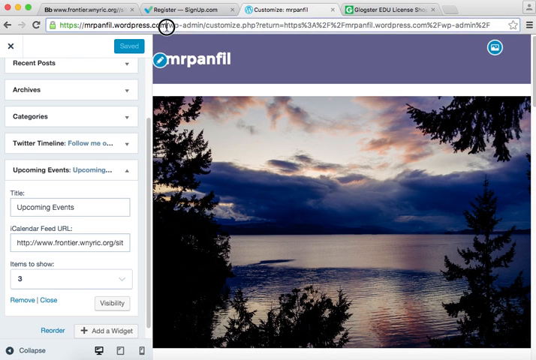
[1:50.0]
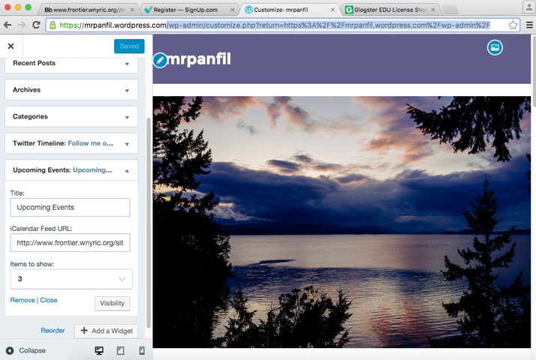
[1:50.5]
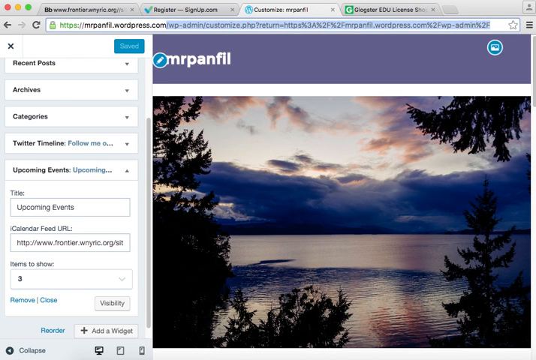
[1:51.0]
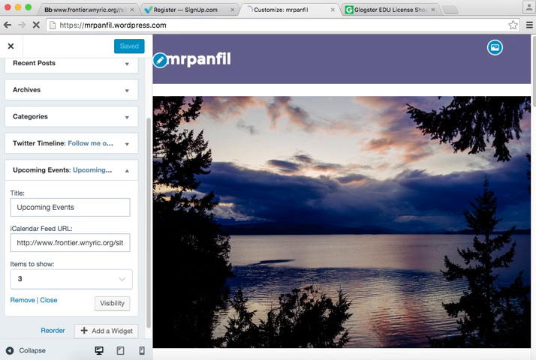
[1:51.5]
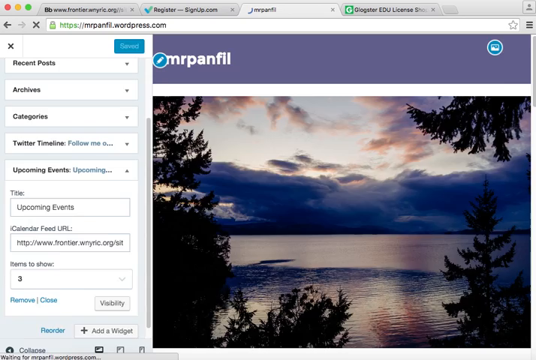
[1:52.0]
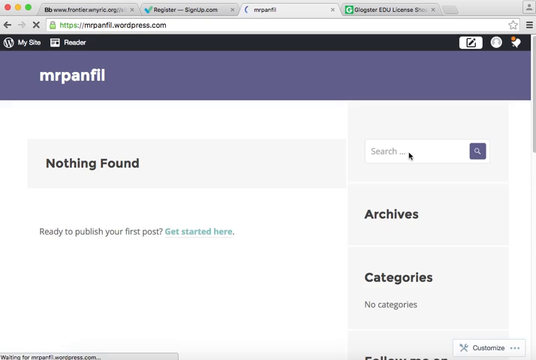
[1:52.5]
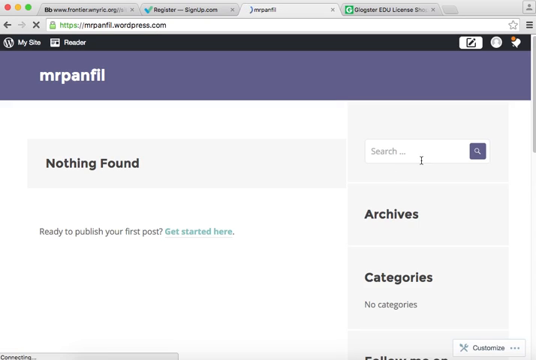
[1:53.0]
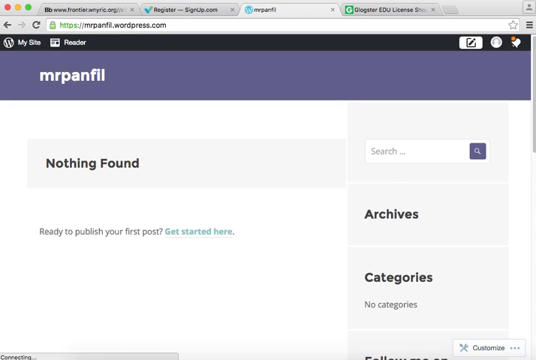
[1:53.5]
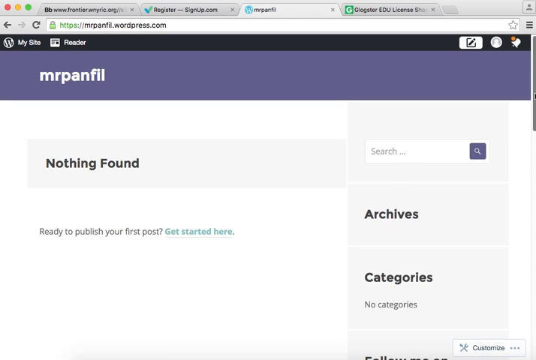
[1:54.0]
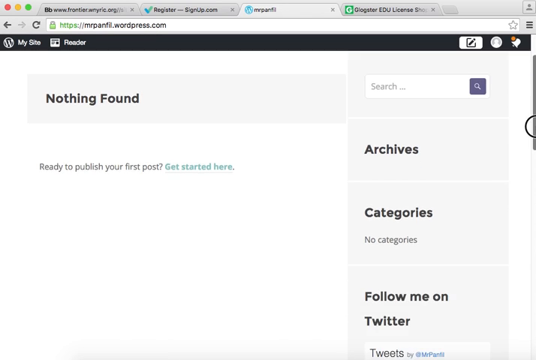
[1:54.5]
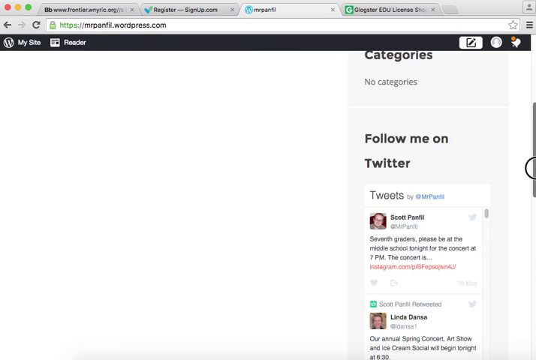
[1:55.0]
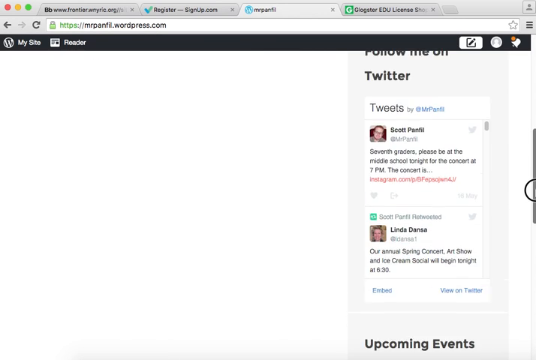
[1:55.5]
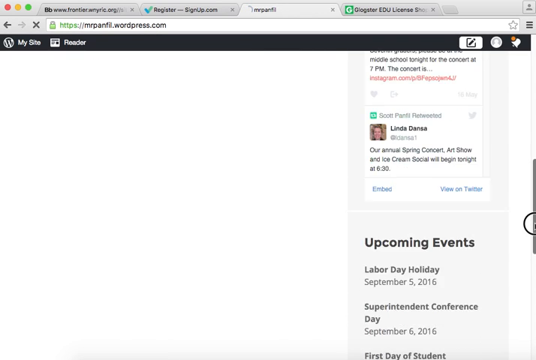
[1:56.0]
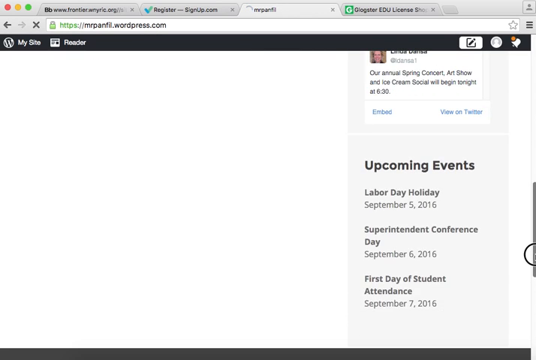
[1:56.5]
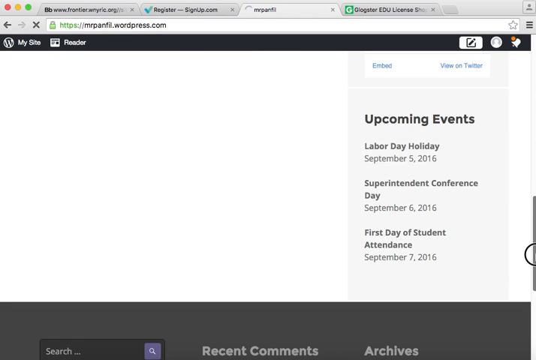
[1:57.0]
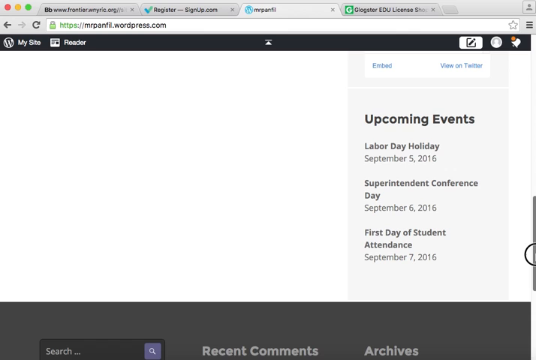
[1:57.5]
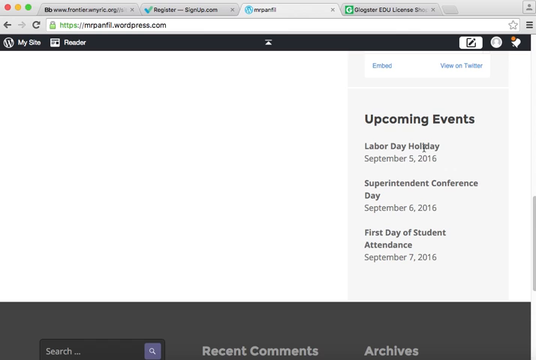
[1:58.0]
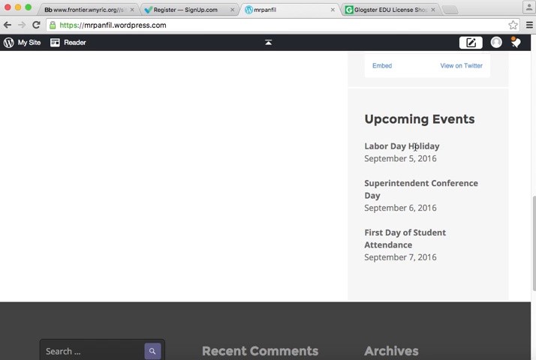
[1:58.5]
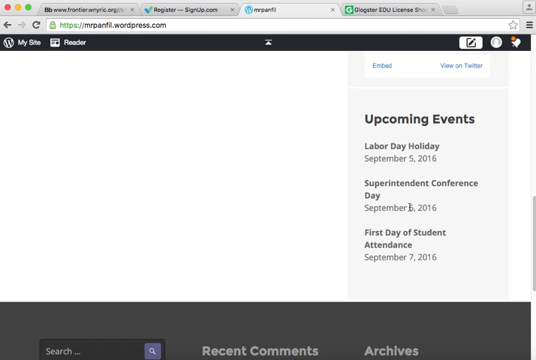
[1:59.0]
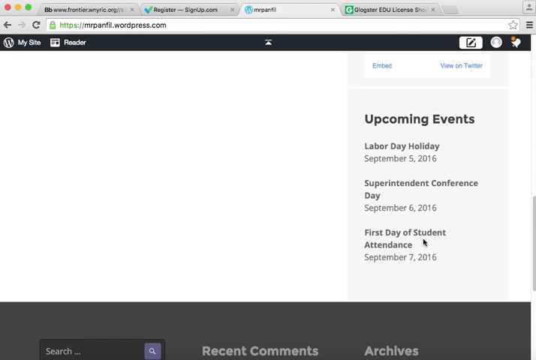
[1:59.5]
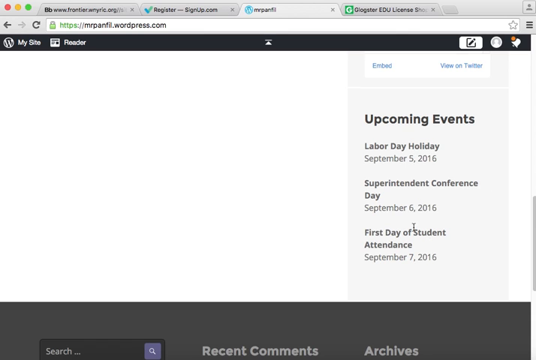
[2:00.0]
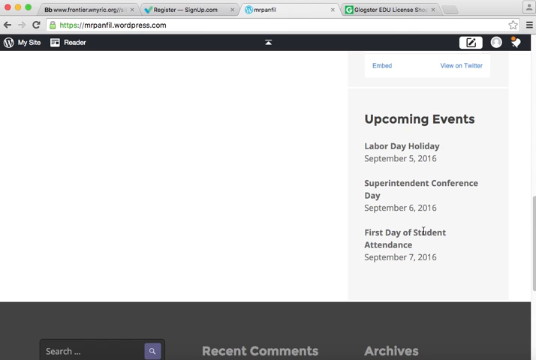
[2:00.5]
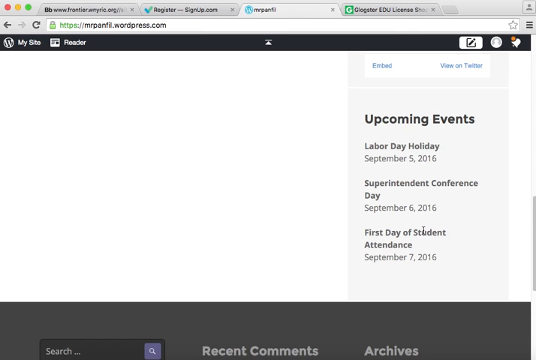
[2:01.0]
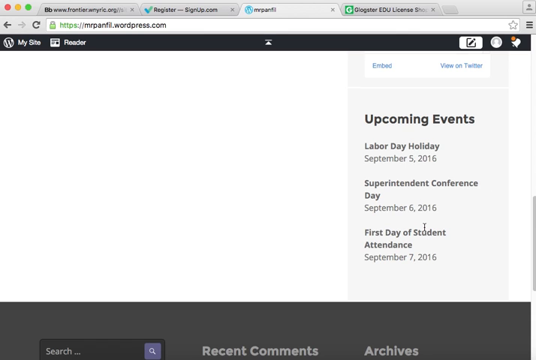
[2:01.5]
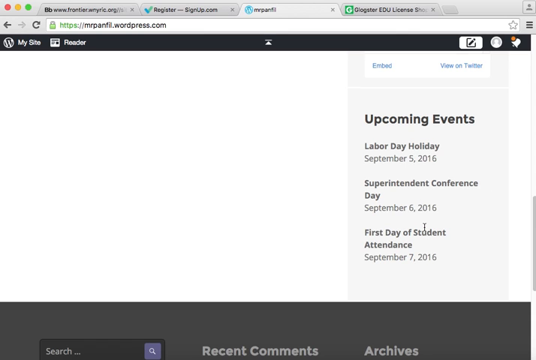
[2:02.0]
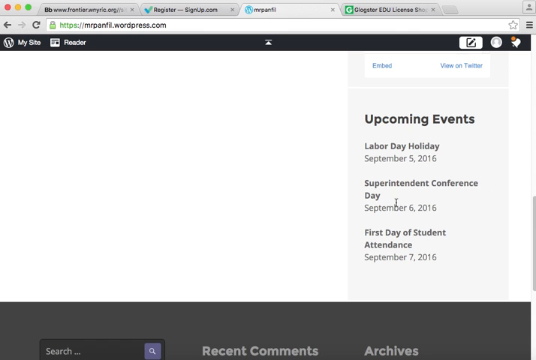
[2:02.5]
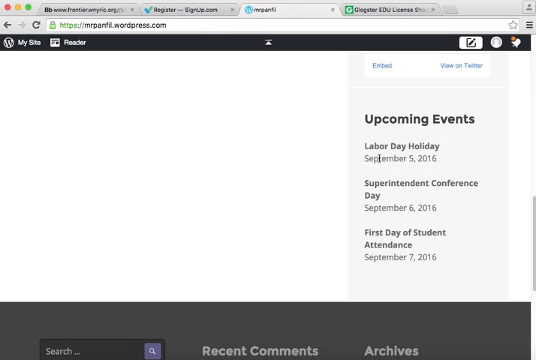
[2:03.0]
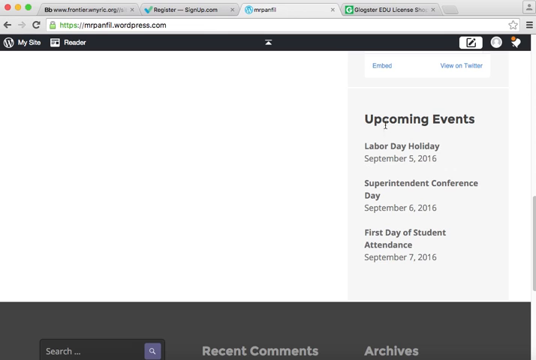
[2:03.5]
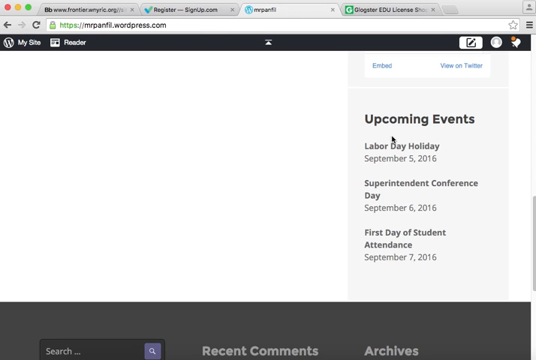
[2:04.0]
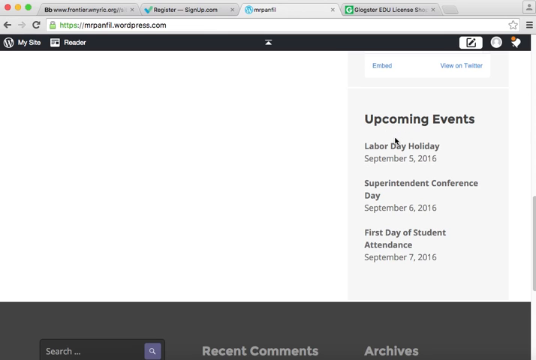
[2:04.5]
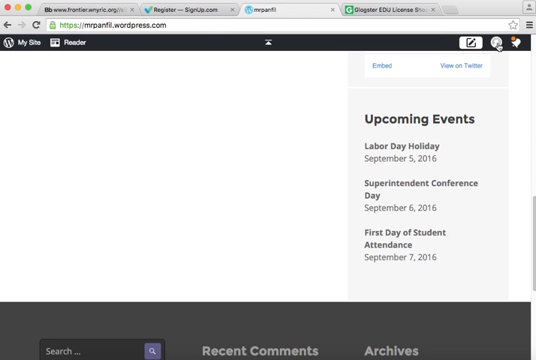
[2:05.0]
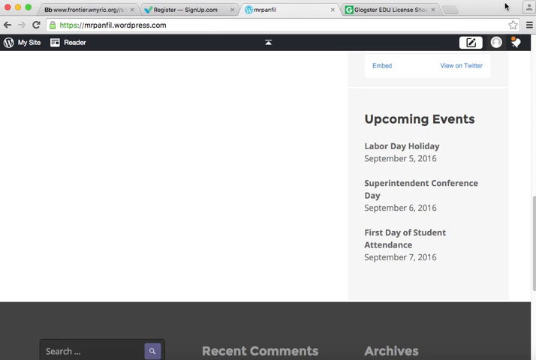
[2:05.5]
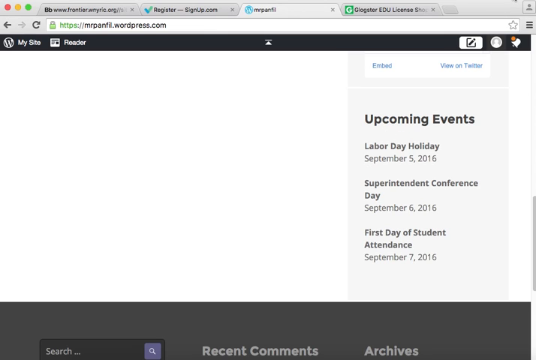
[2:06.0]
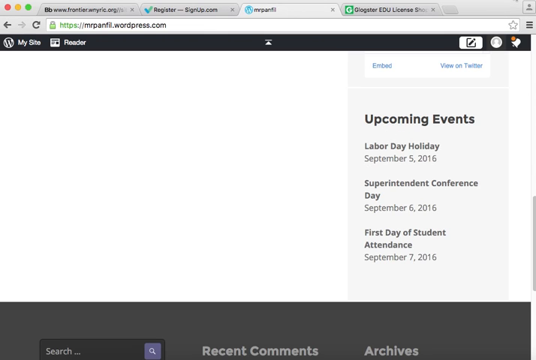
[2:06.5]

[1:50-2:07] The user clicks Save on the Upcoming Events widget, then removes the admin part of the URL to go directly to the WordPress page. After the page loads, he scrolls down using the right side of the browser and checks the upcoming events. Three events in September show up through the widget on the WordPress page.